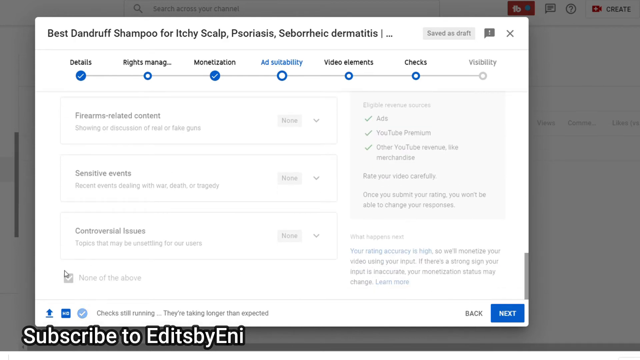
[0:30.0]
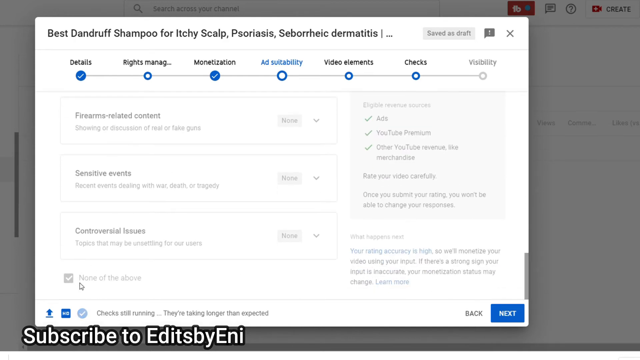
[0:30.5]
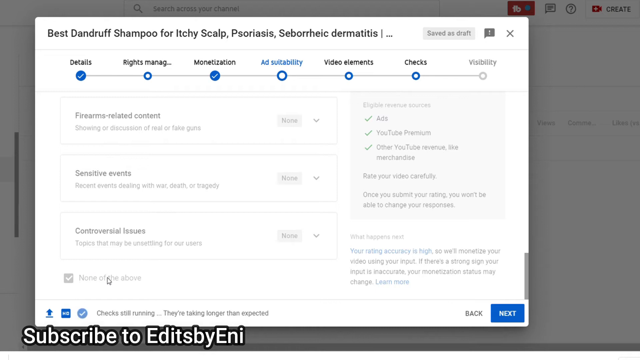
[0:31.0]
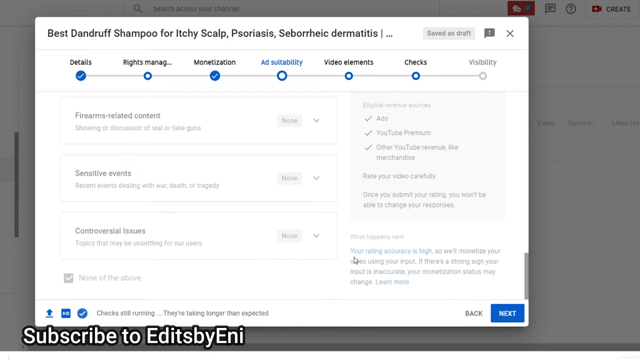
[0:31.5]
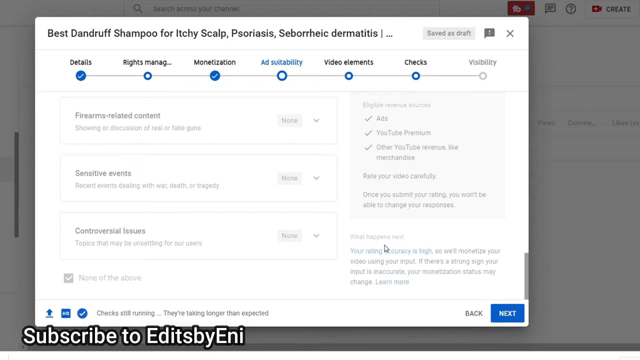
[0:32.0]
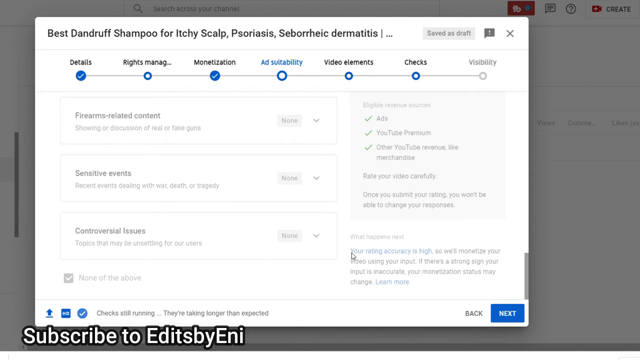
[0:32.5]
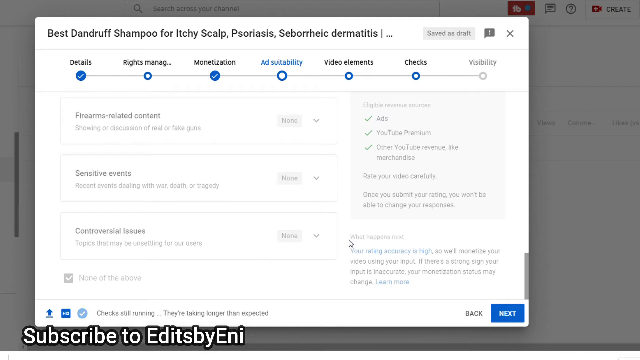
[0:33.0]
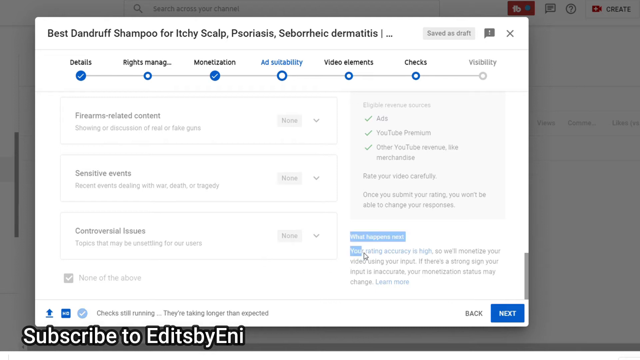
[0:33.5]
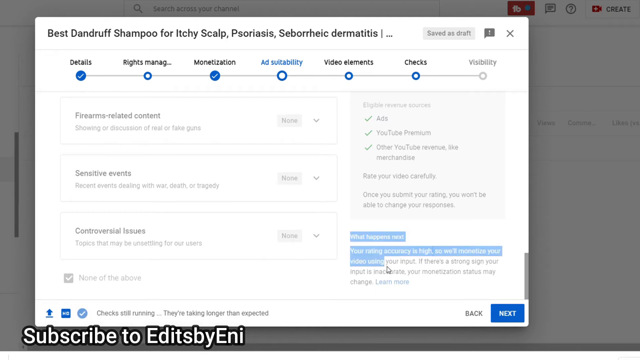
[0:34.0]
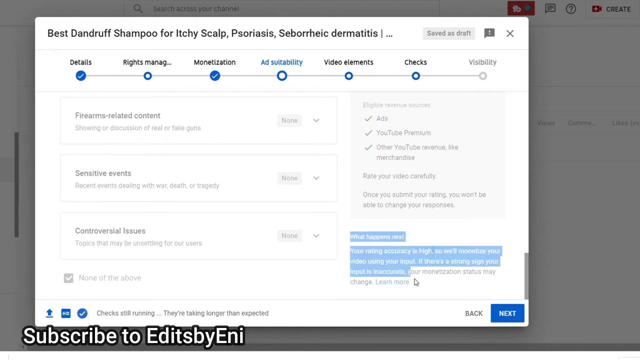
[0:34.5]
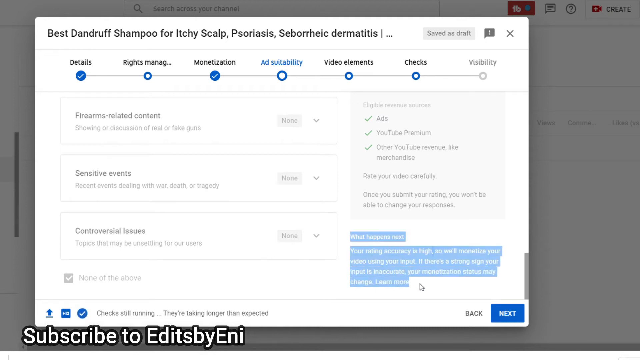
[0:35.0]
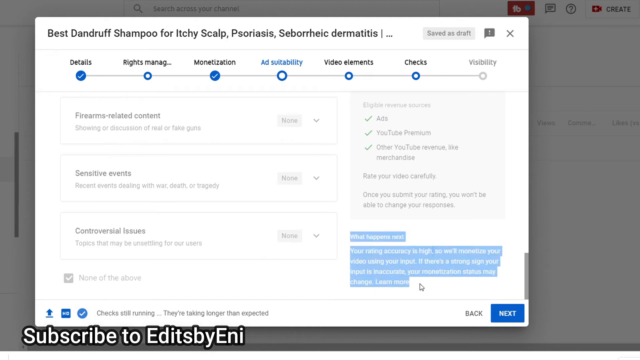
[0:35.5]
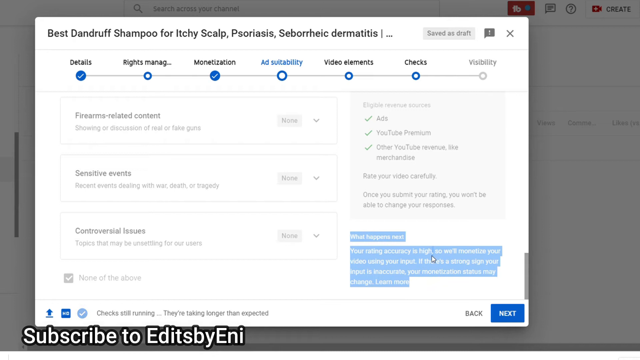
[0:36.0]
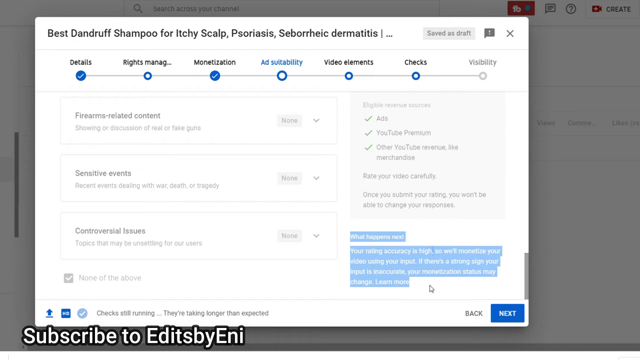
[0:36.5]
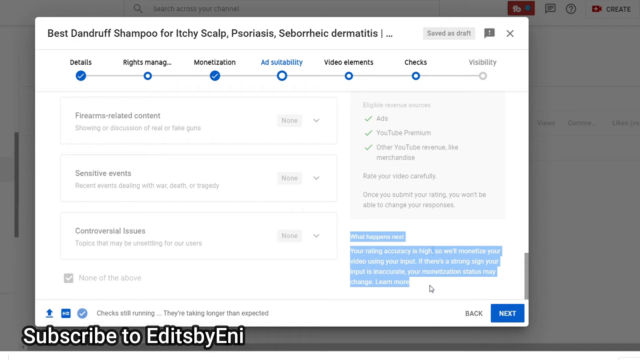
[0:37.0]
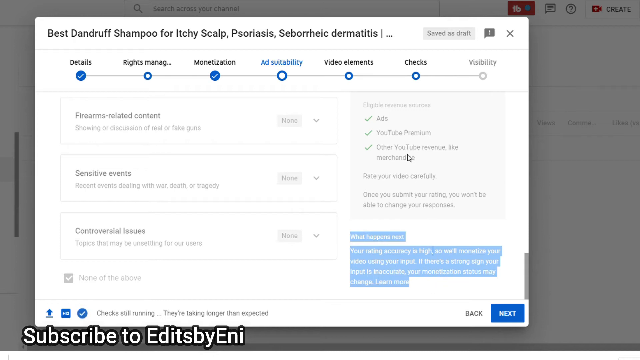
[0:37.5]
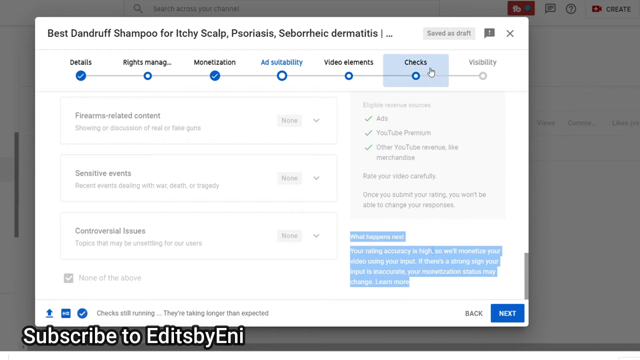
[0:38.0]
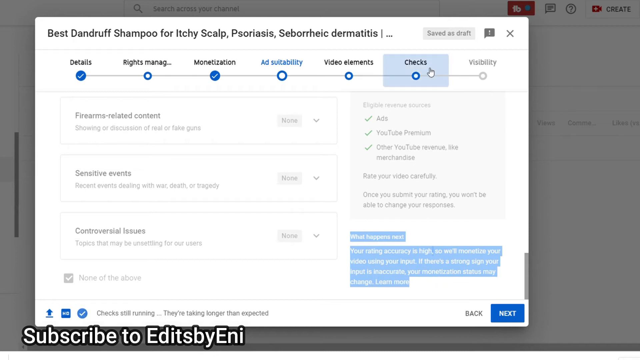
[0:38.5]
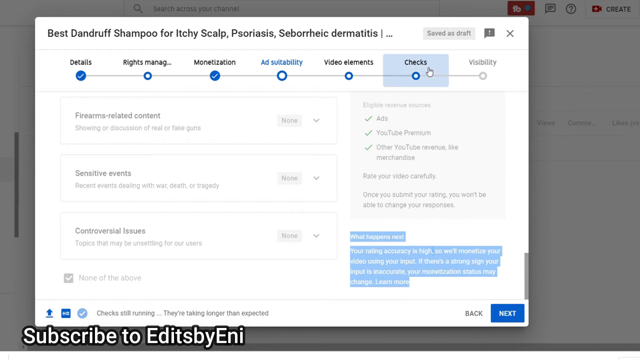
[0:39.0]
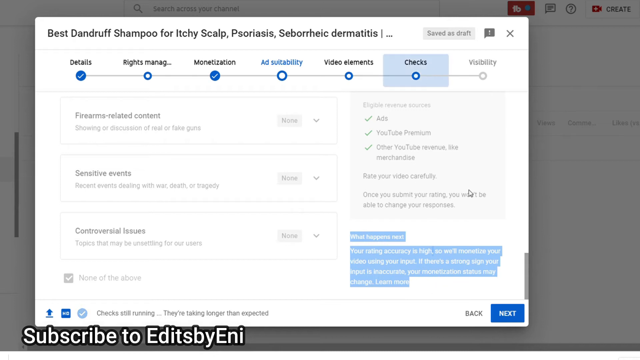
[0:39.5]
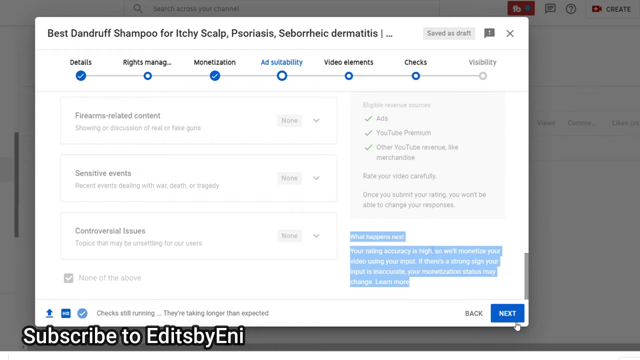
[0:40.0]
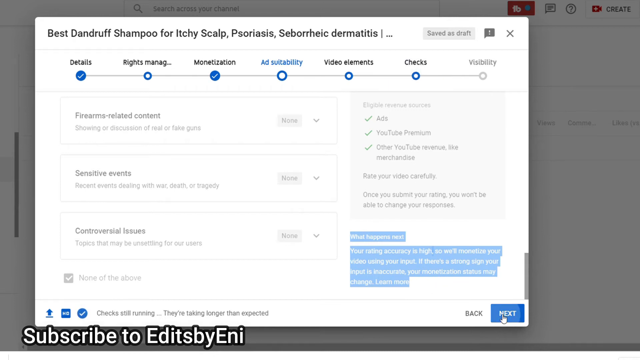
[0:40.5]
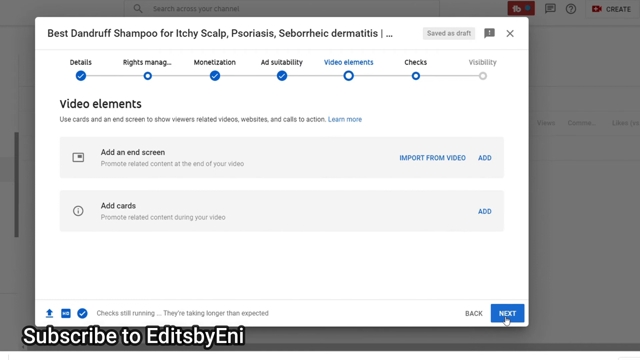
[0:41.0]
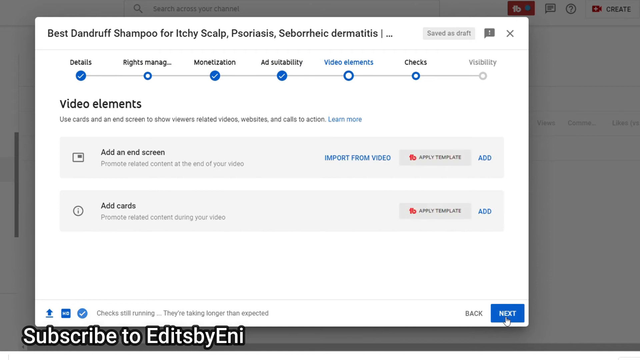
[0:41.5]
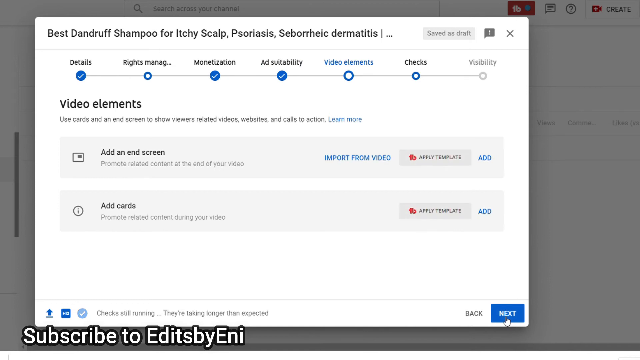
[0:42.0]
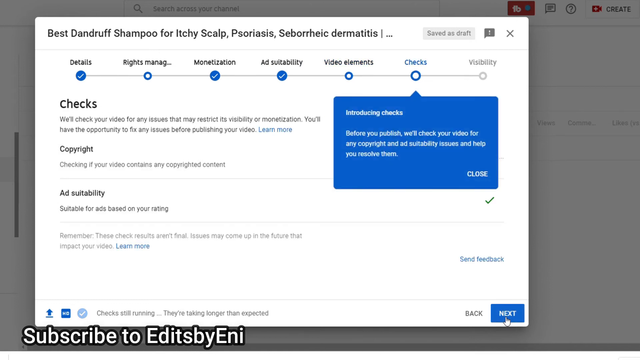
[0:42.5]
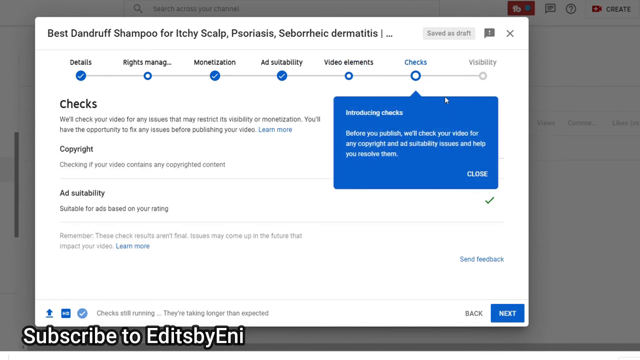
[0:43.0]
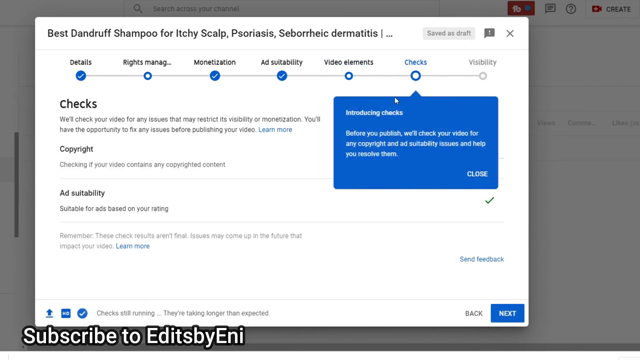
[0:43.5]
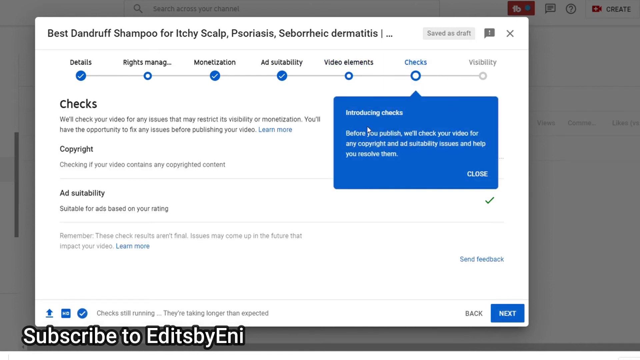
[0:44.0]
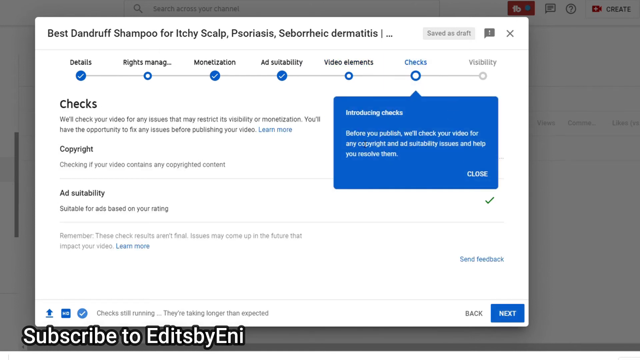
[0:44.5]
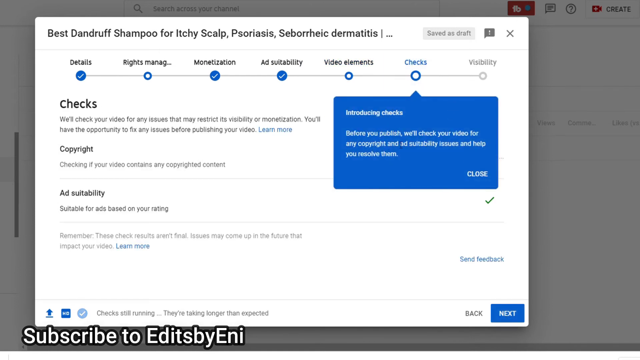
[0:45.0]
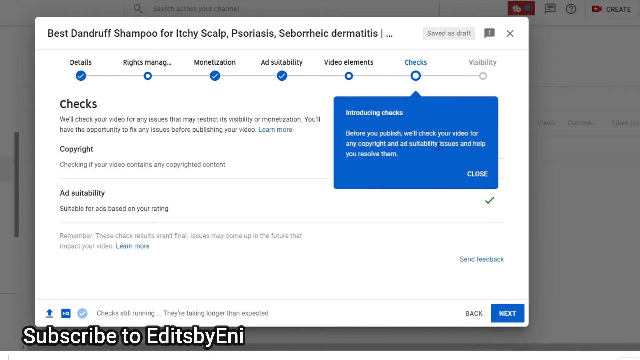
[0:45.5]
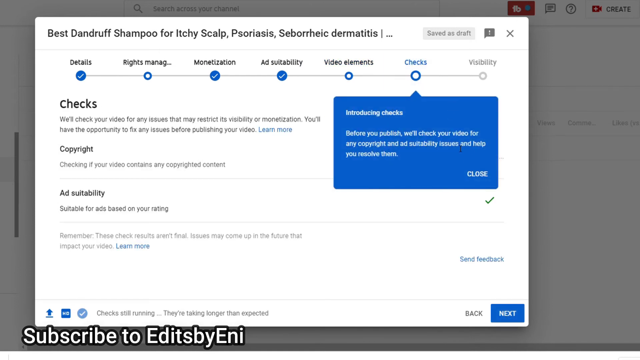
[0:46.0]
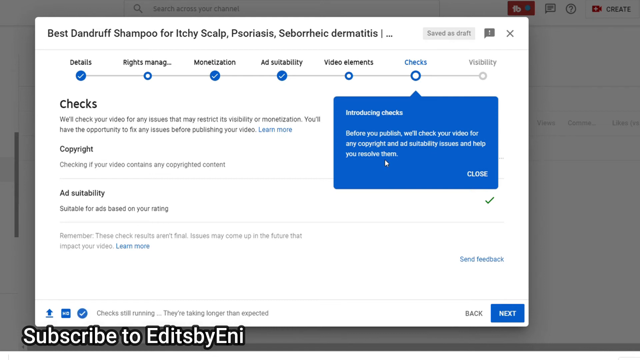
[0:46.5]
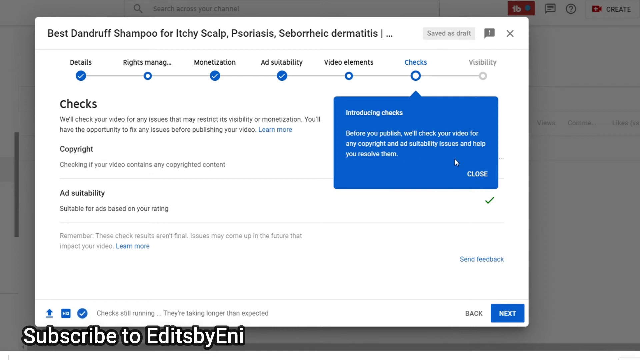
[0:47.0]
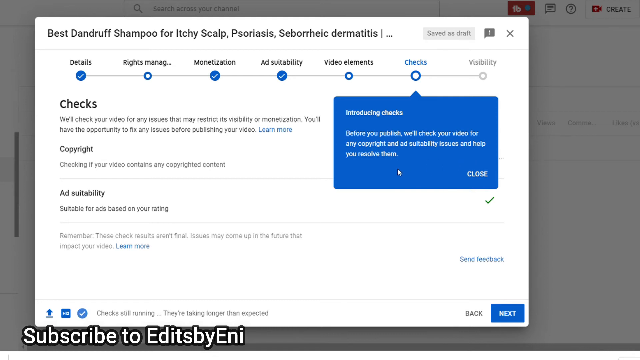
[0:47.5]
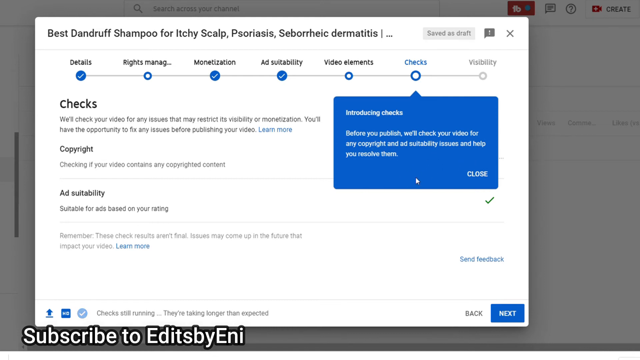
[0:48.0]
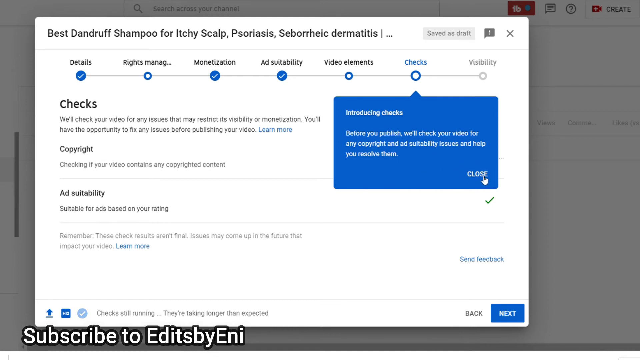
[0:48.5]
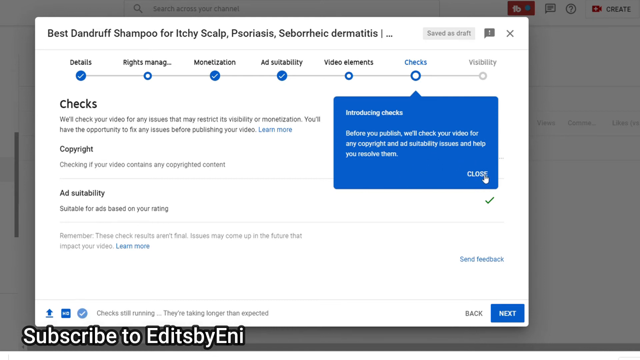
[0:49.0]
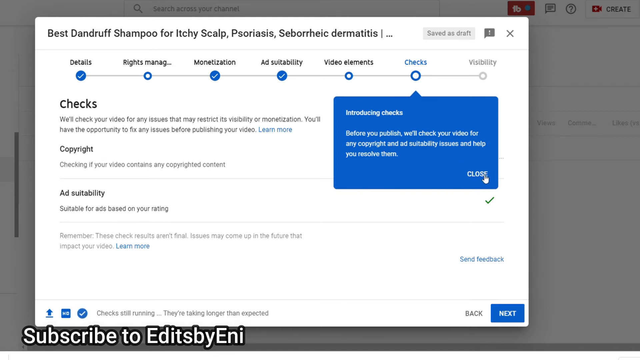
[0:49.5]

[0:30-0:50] A window shows a large white dialog box headed "best dandruff shampoo for itchy scalp psoriasis etc". Below it is a long horizontal timeline of options with blue checkpoints; ad suitability, fourth in the timeline, is selected and its contents are shown below. The mouse pointer hovers around the "none of the above" checkbox below the ad suitability contents, then moves right to a section stating "what happens next", which is selected with the pointer. The pointer moves up to the checks option in the timeline but does not click it. The next button at the bottom of the page is clicked, moving the page to the video elements option, which follows ad suitability in the timeline. Next is pressed again, moving to the checks option. A blue dialog box, like a drop-down, appears stating "introducing checks" with details. The cursor hovers over the blue box's contents, and then the close option at the bottom right of the blue dialog box is clicked.